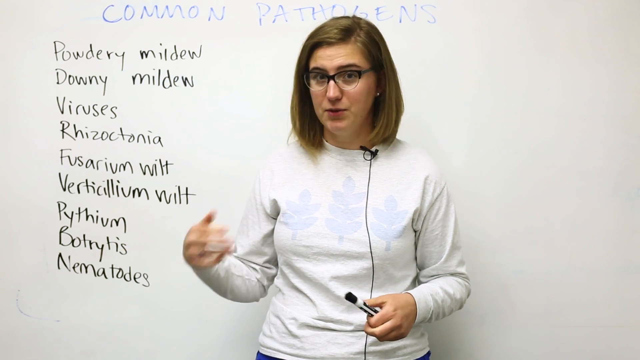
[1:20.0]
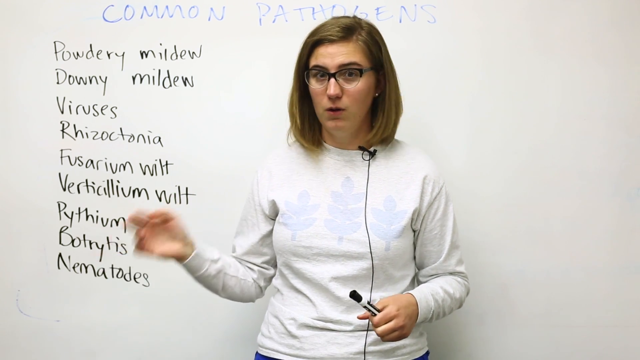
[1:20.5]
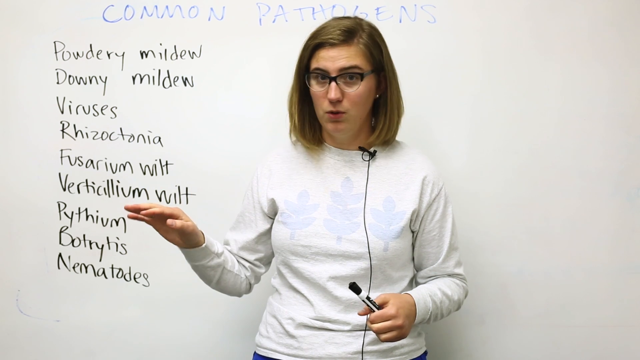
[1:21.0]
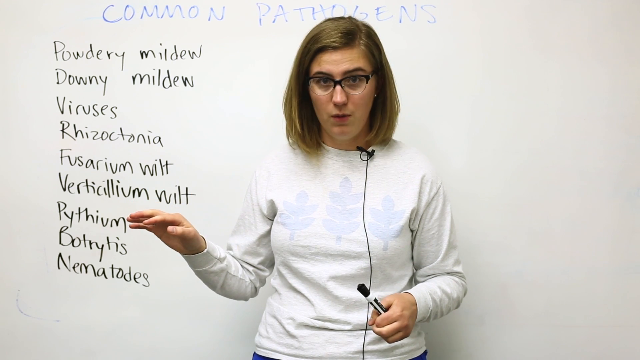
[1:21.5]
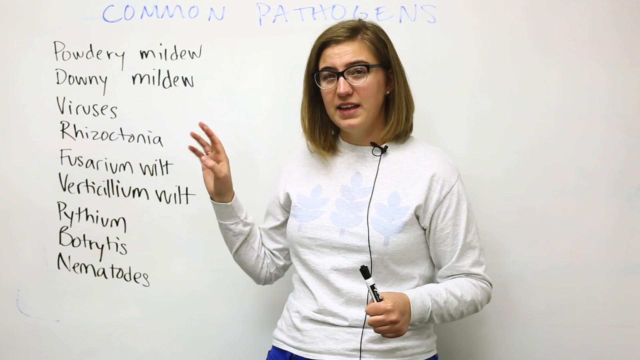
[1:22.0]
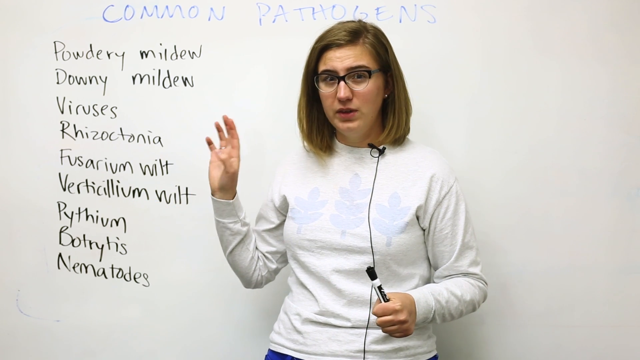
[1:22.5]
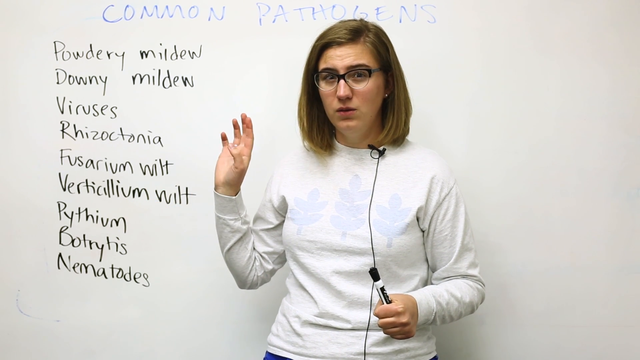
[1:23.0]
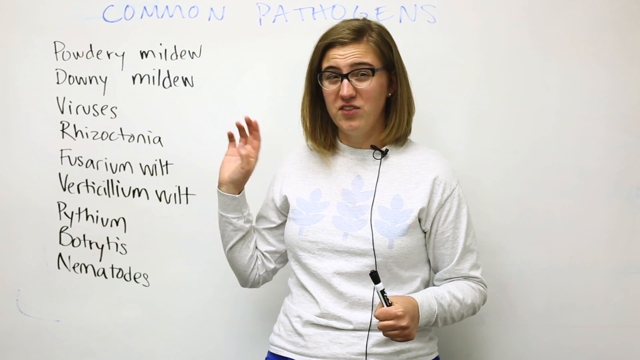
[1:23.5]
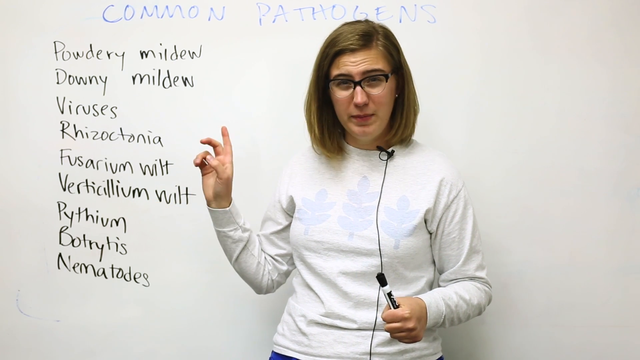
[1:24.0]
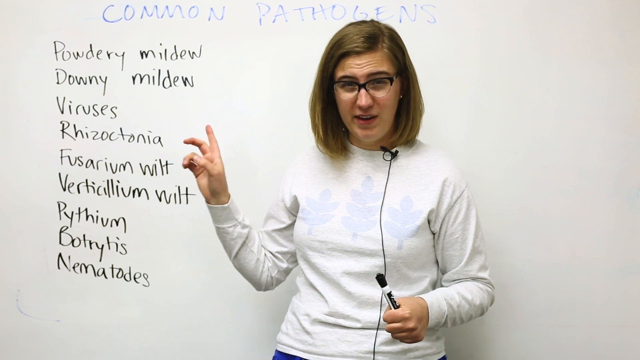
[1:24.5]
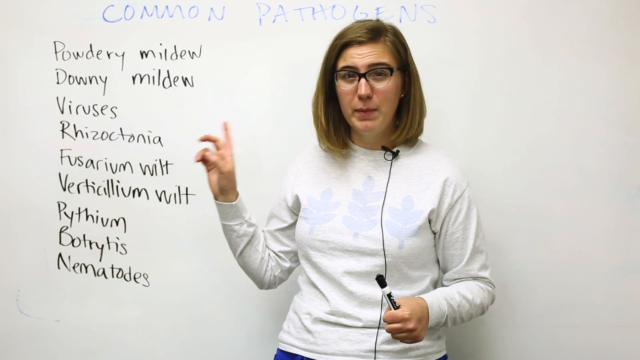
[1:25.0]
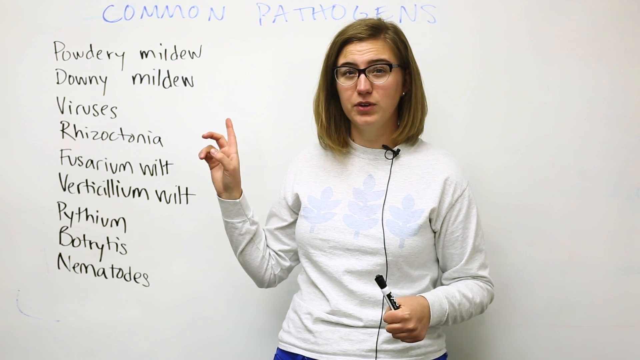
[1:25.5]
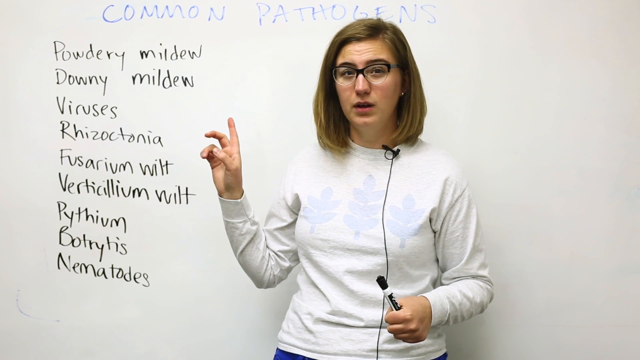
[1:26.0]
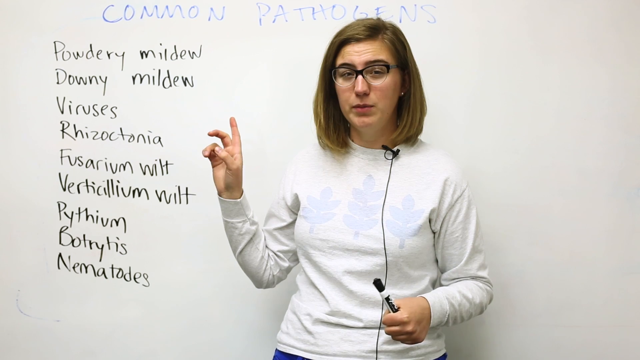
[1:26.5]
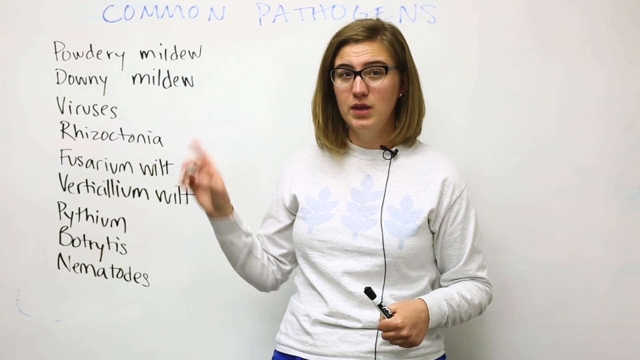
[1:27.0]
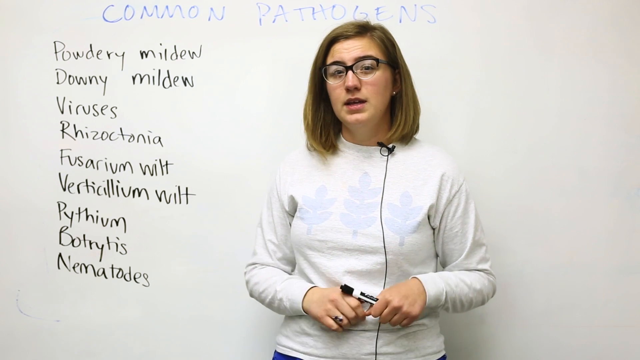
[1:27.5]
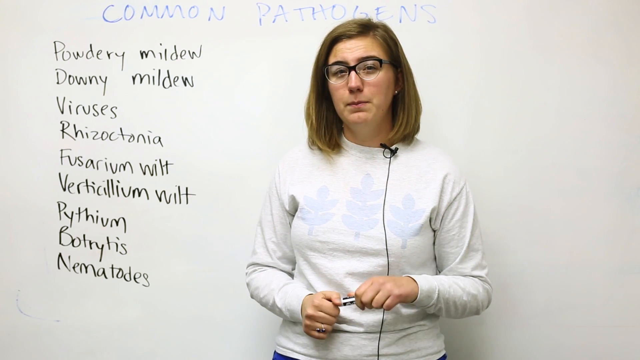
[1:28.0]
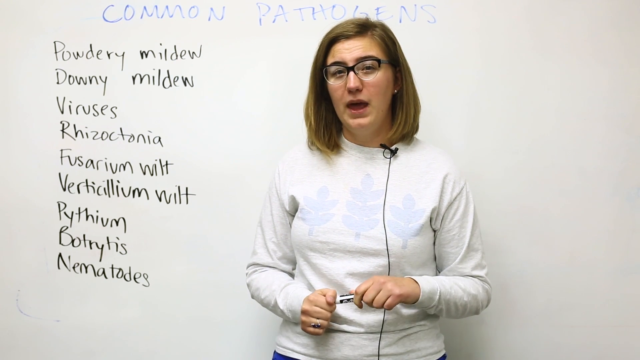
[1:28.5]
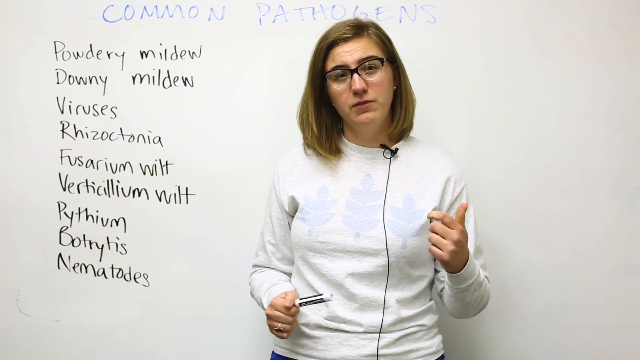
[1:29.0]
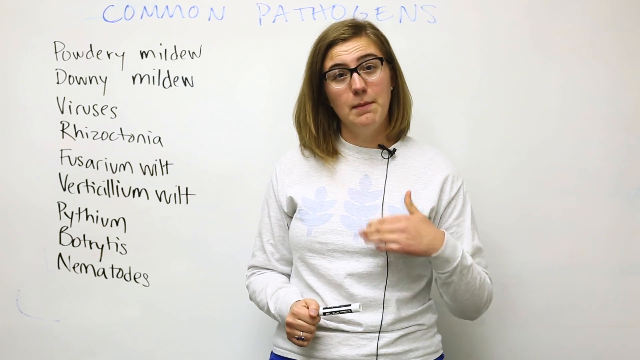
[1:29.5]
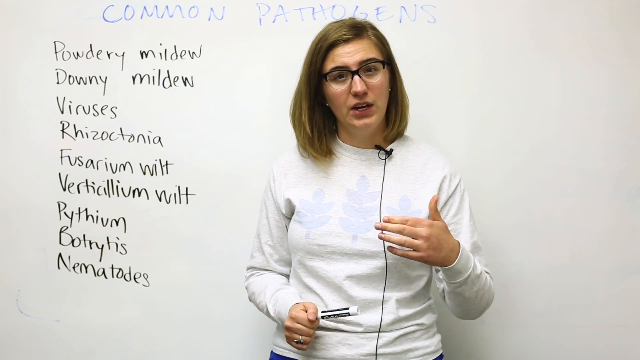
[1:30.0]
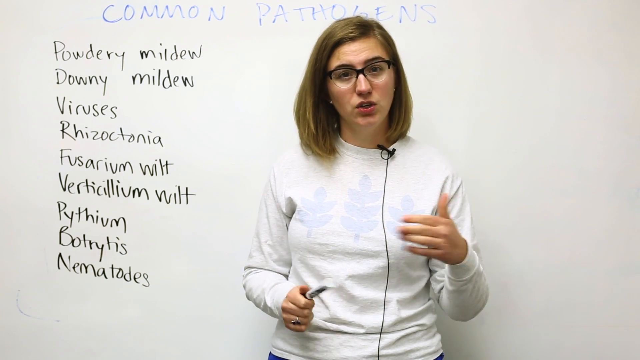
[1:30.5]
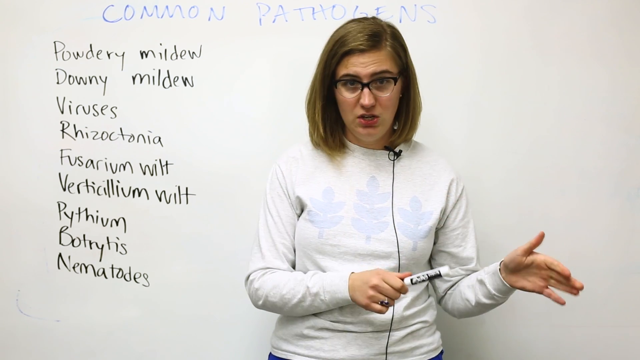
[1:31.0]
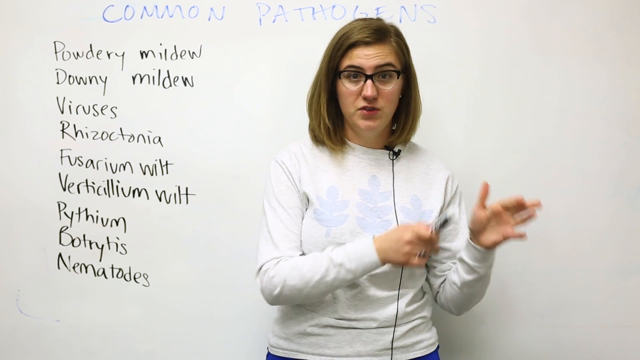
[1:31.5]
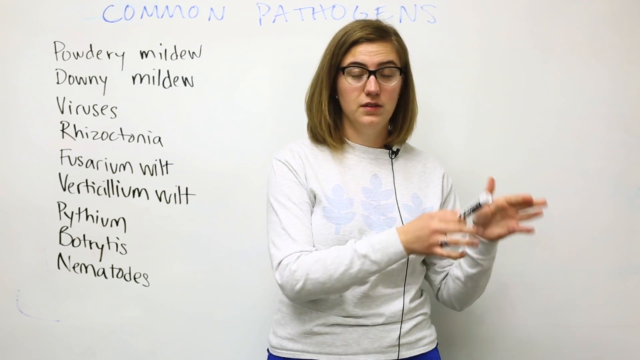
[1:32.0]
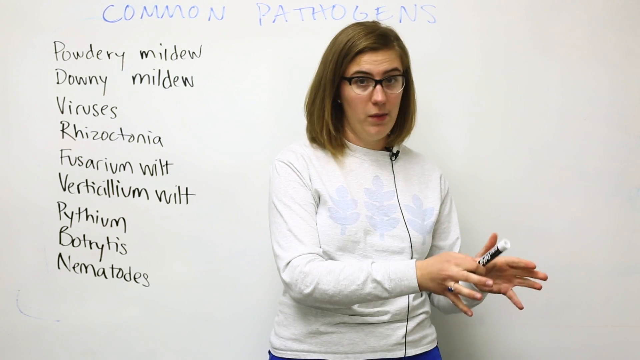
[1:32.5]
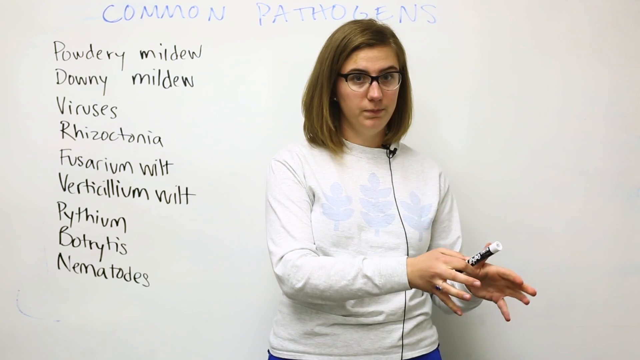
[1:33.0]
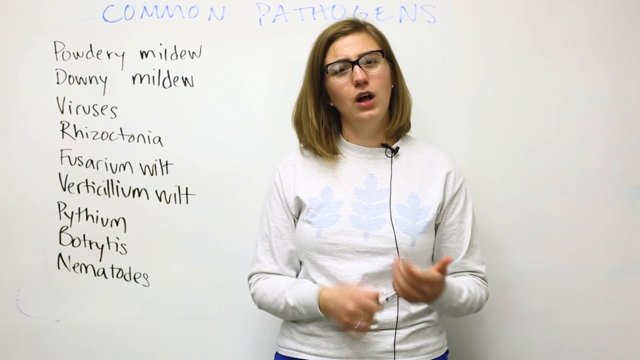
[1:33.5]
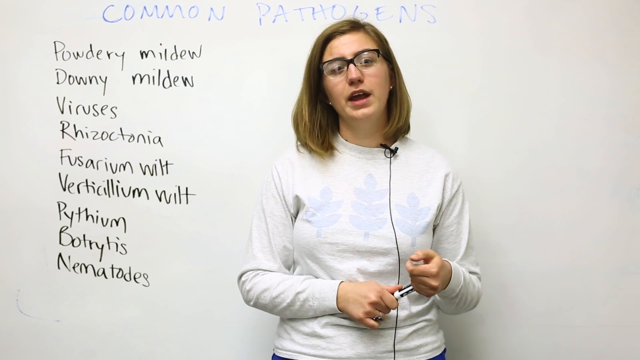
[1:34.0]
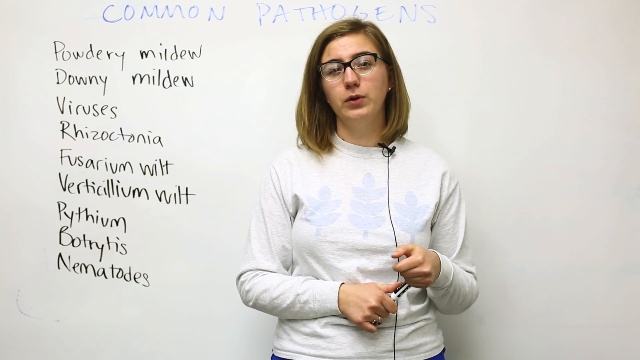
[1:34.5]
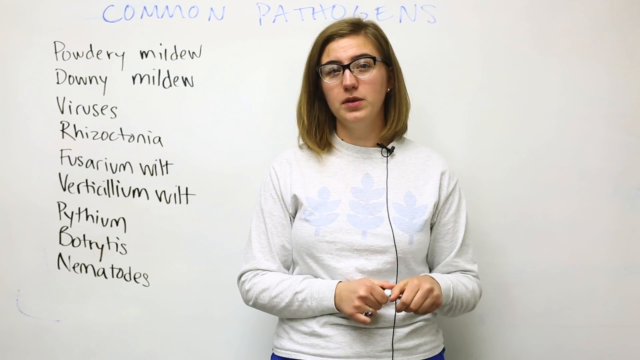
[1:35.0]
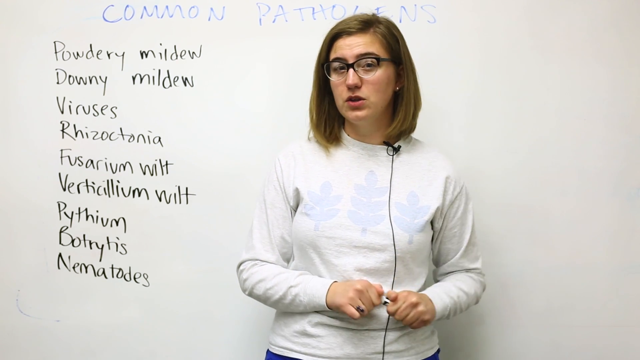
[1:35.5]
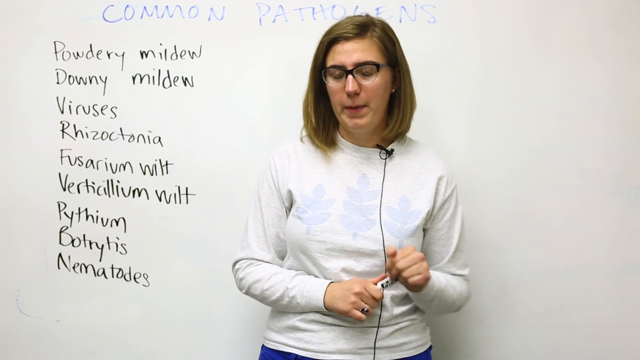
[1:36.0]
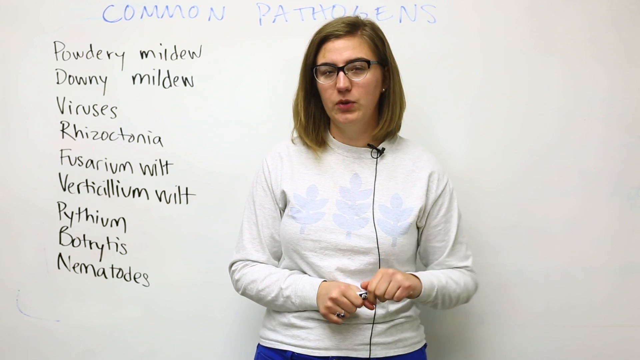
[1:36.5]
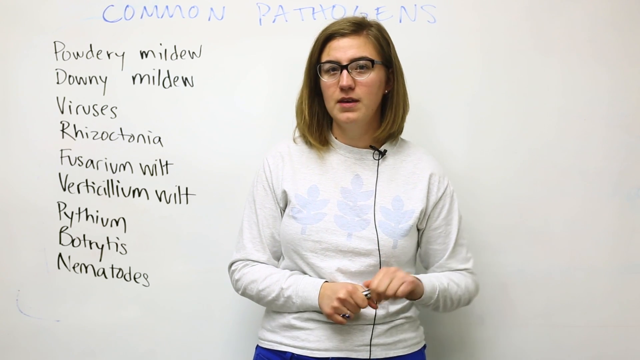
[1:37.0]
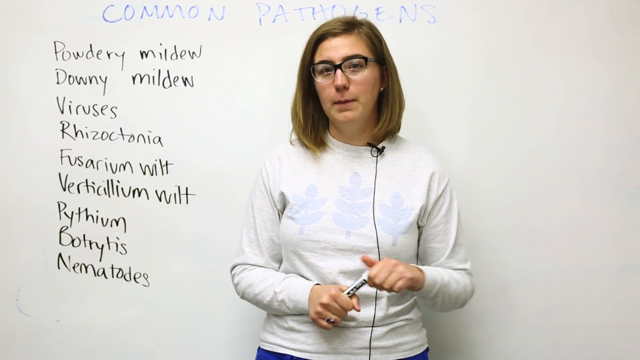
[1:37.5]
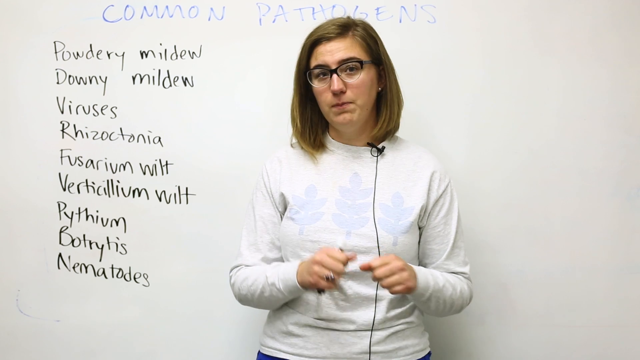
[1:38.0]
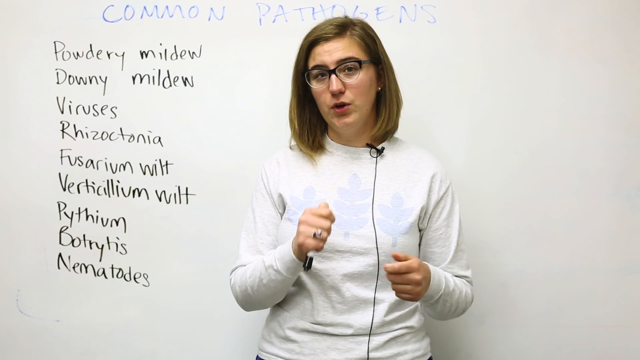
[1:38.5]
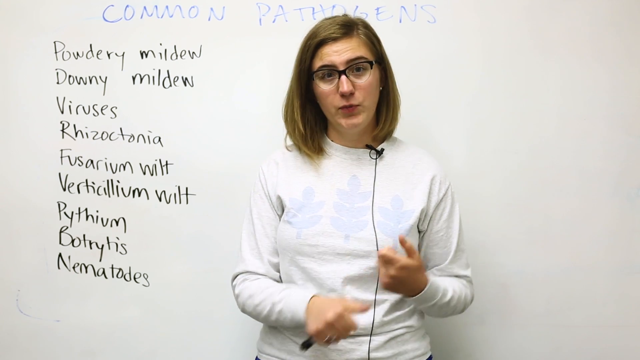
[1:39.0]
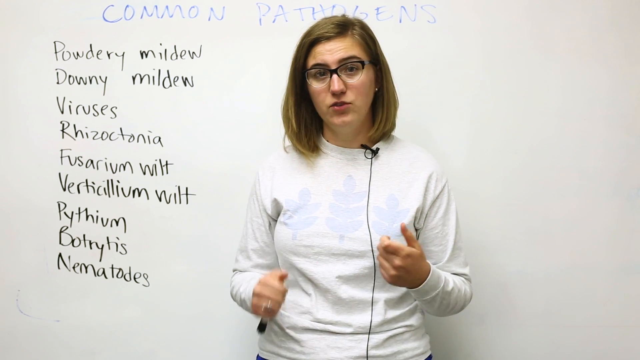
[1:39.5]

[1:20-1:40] A woman stands in front of a large whiteboard, talking. She has written on the whiteboard with a dry erase marker: at the top, in blue marker, it says "common pathogens", and below that on the left side are the names of several common pathogens, "powdery mildew", "downy mildew" and "viruses", with several more written underneath. The entire time she talks, she kind of moves her hands around and gestures toward the words, and at one point she kind of points over to the board. She holds the dry erase marker, sometimes passing it from one hand to the other and kind of swiveling it around in her fingers. She uses both hands to gesture, moving them out and back together. She has medium-length brown hair that touches her shoulders and wears glasses that look thick-rimmed on the top and thin-rimmed on the bottom.